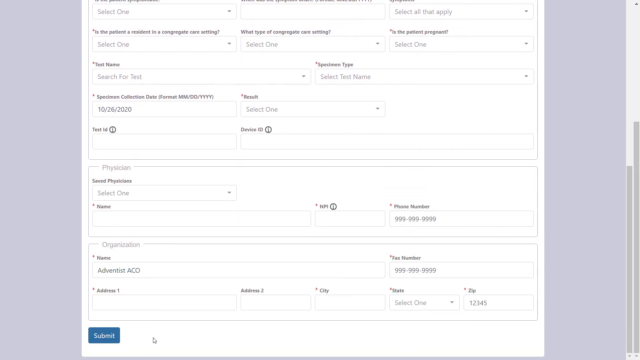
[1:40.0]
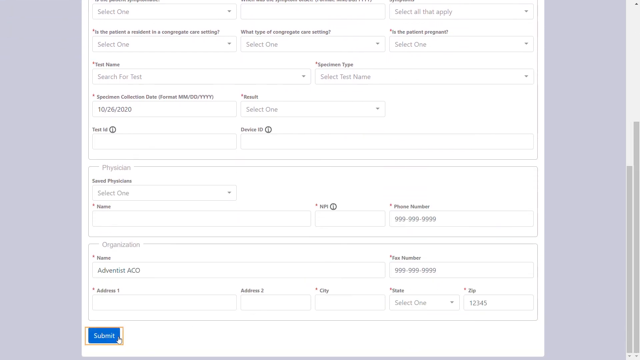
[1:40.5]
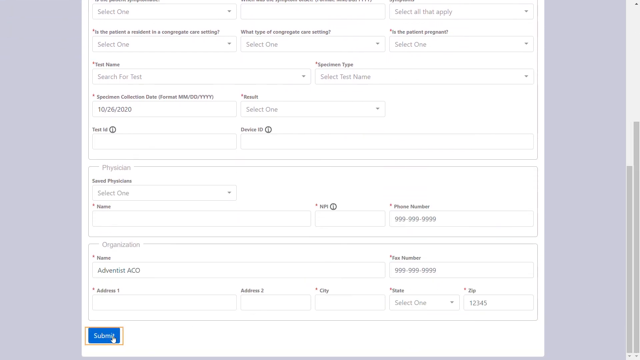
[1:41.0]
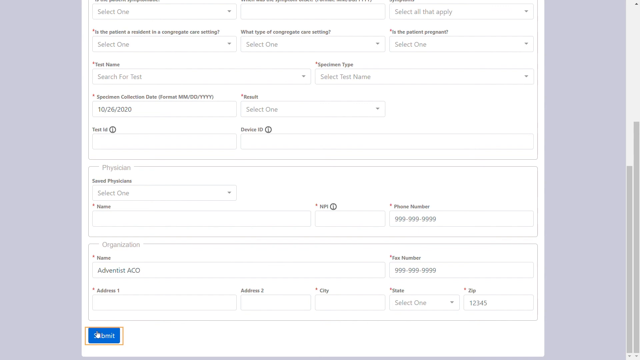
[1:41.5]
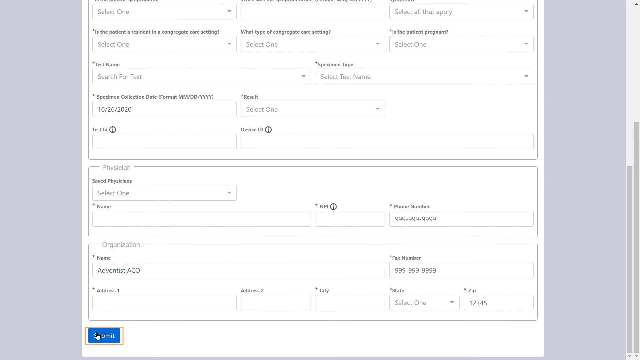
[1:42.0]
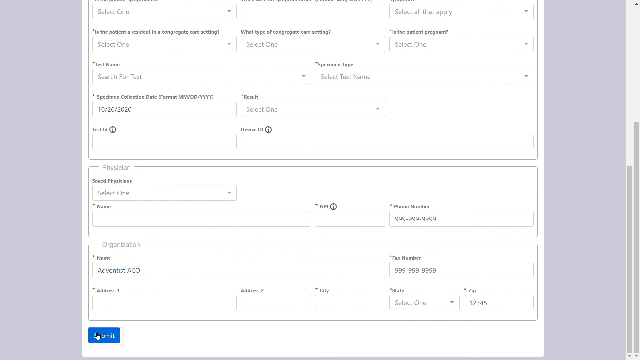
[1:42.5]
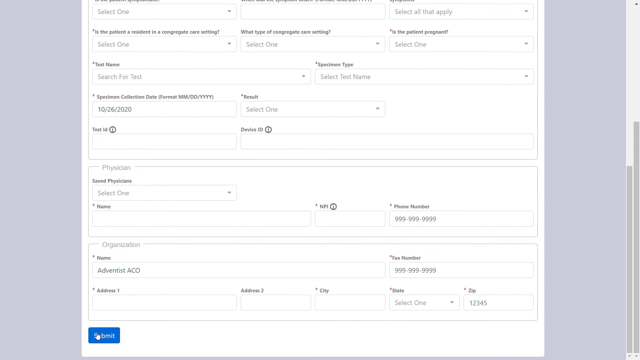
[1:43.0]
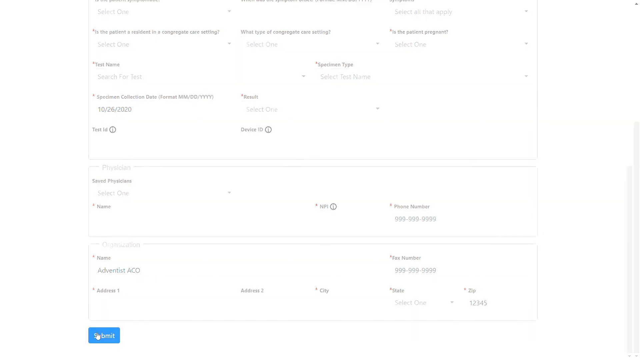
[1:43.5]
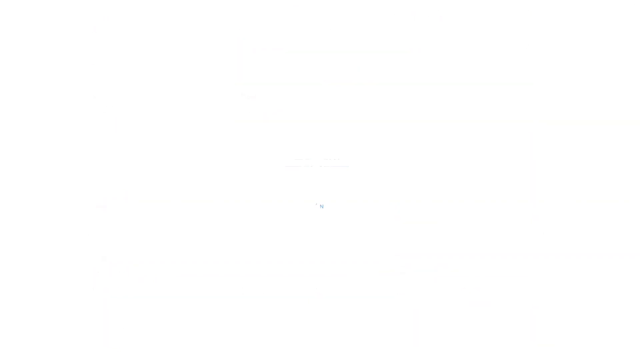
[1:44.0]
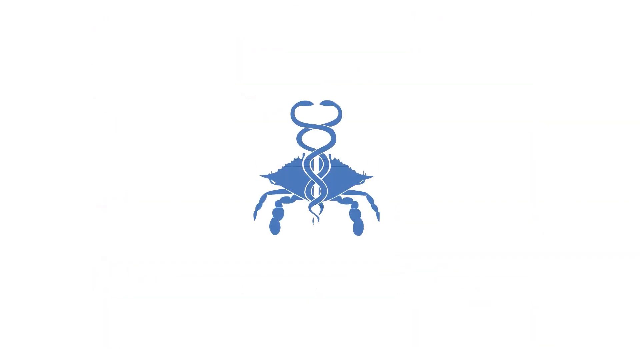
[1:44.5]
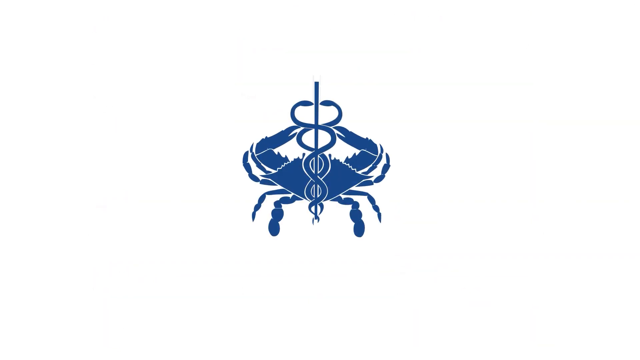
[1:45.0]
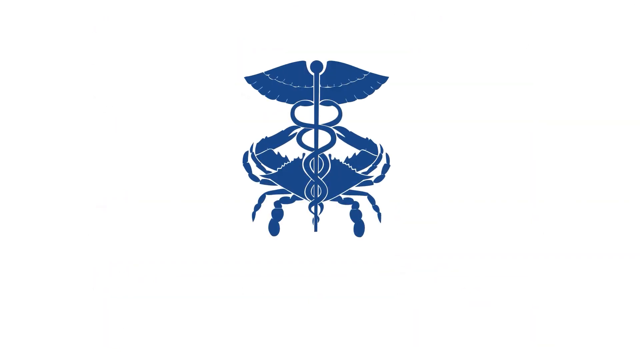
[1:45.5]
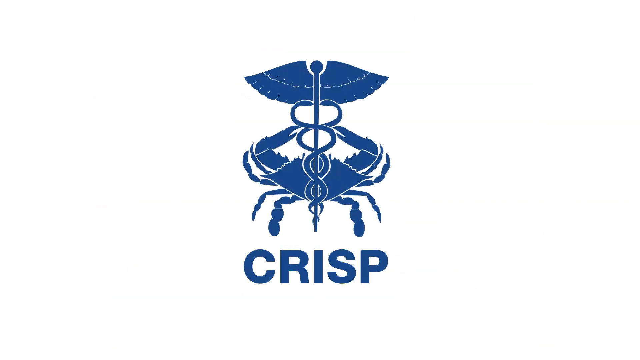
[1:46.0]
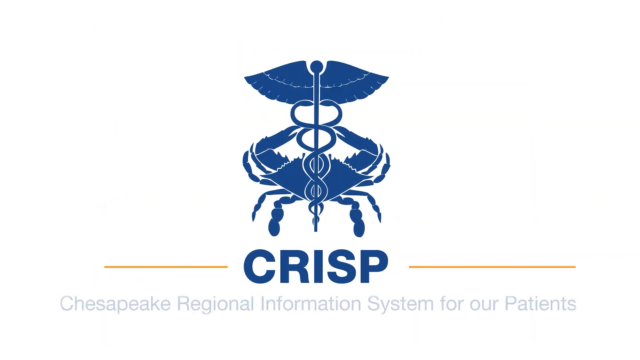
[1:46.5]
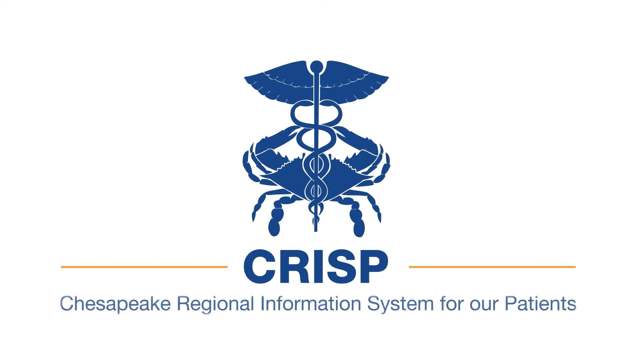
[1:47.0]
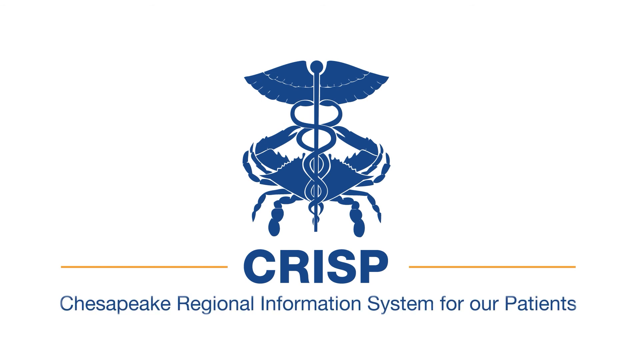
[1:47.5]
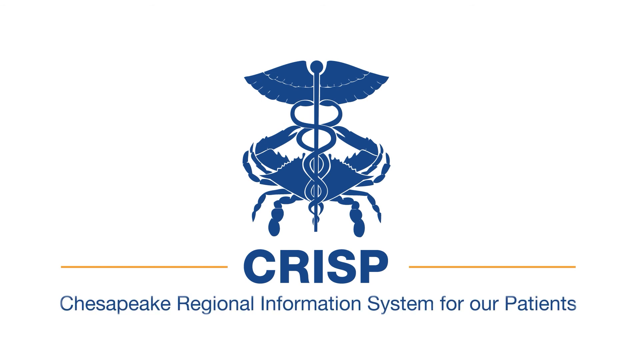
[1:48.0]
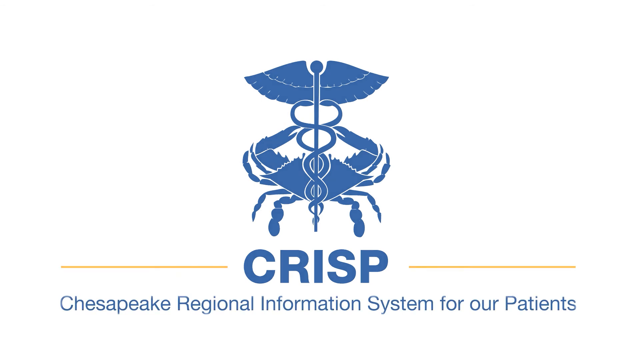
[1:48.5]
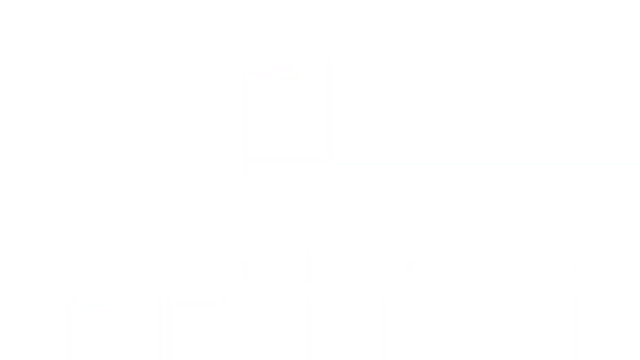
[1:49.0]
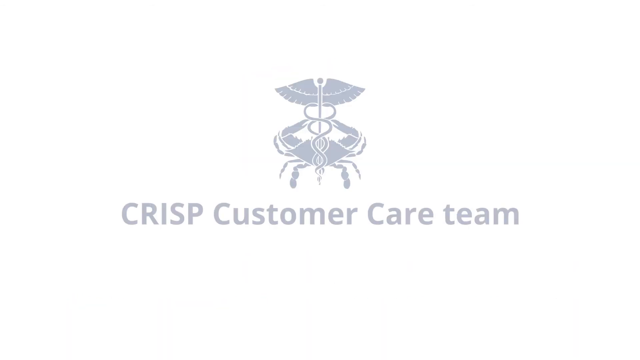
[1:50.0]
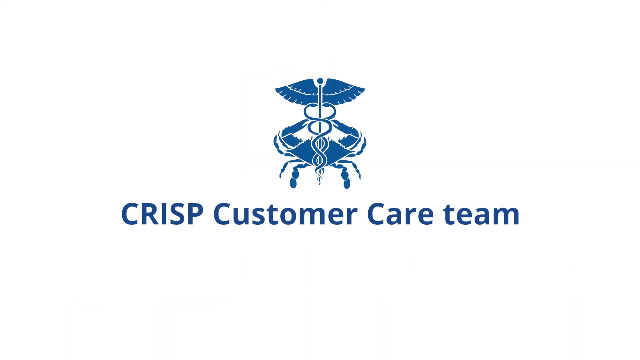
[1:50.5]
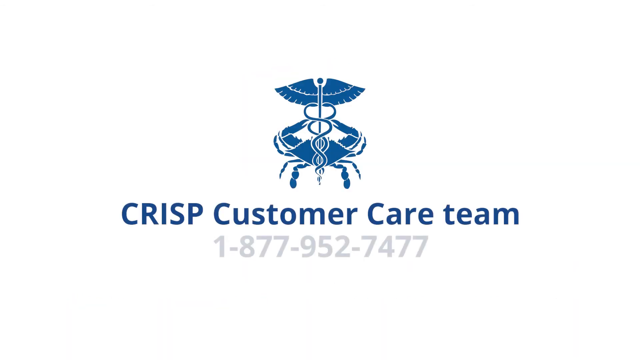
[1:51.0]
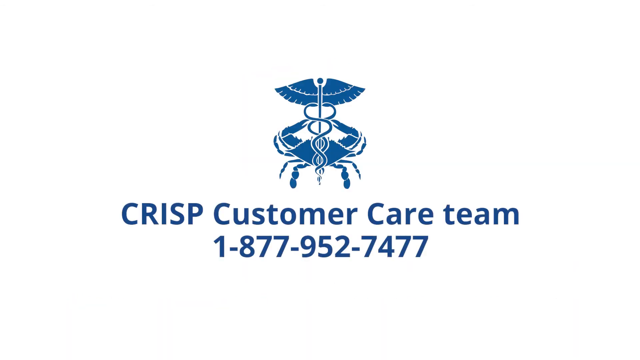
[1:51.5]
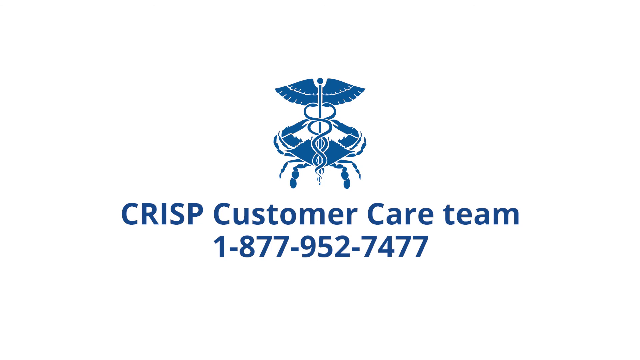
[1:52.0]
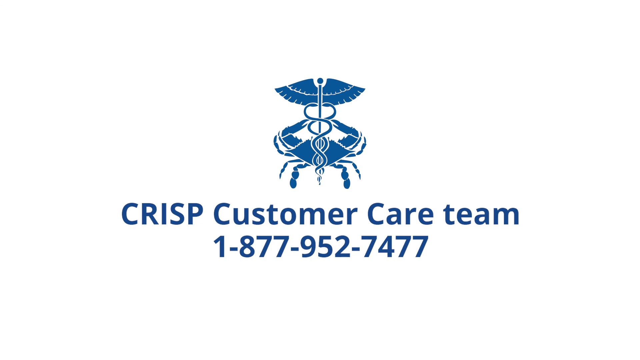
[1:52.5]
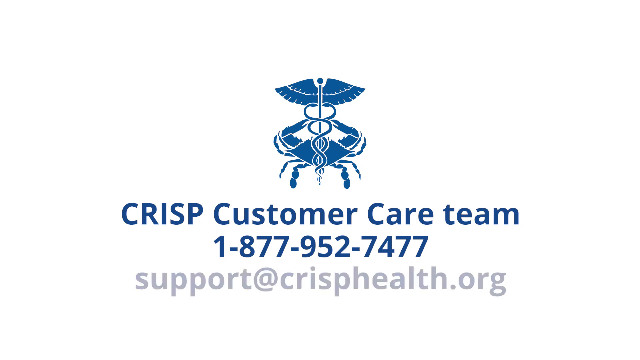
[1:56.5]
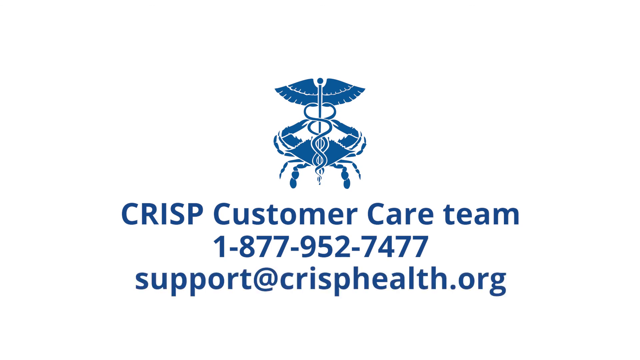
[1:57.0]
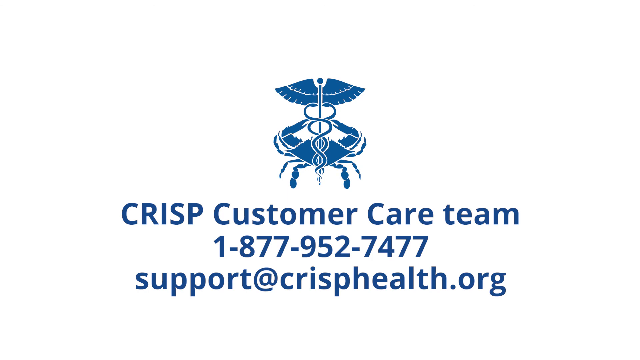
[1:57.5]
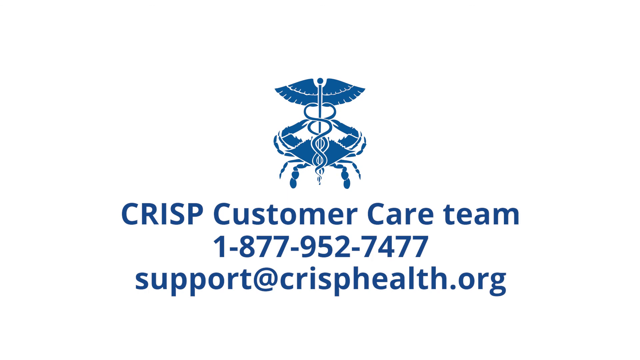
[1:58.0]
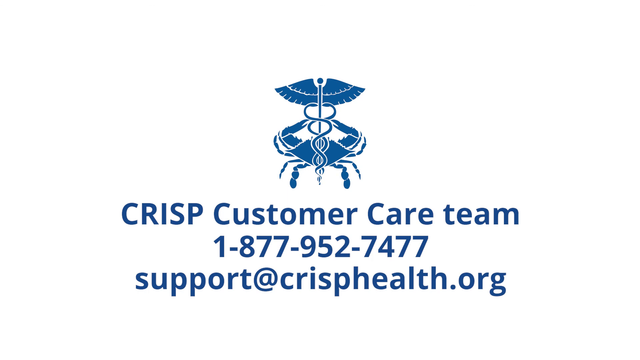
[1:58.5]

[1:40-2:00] The lab order page with the patient's personal information is still shown. The video then returns to the blue crab with the heart association, or medical, symbol and wings on top, with "CRISP" and, at the bottom, "Chesapeake Regional Information System for Our Patients." After a blank screen, a CRISP customer care team screen appears with the crab, wings and medical association symbol, followed by an 800 phone number. The crab, letters and phone numbers are all in blue. The email address support@crisphealth.org is also shown.